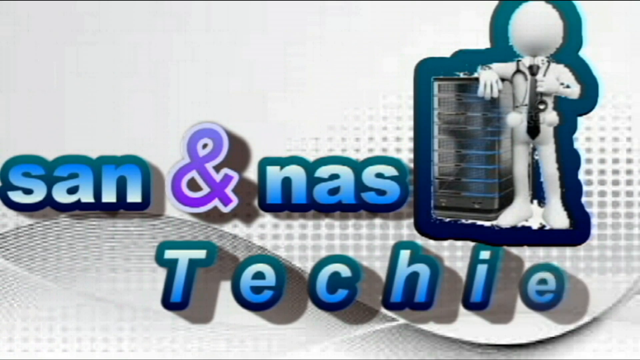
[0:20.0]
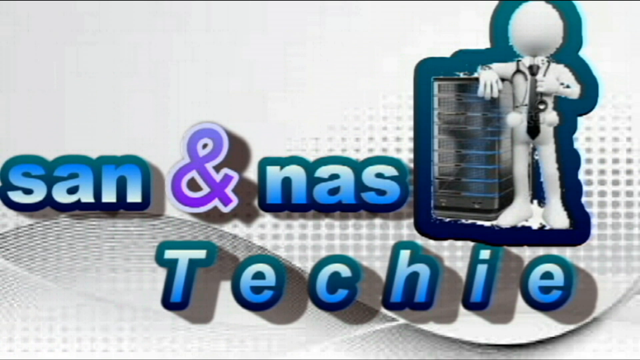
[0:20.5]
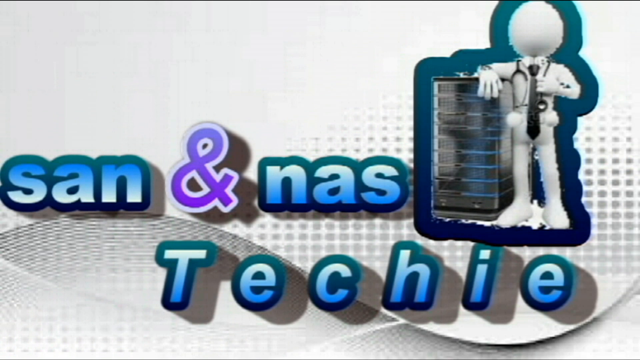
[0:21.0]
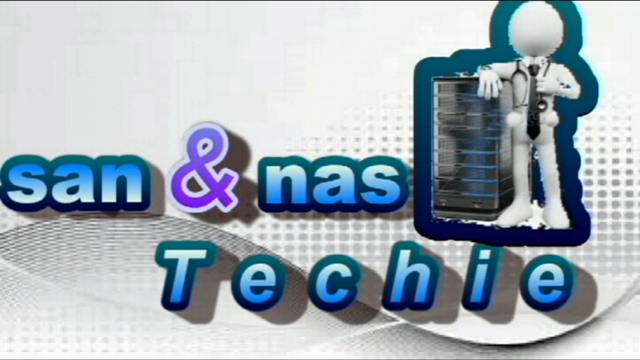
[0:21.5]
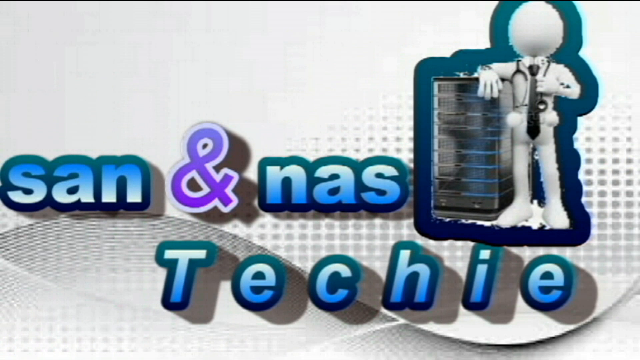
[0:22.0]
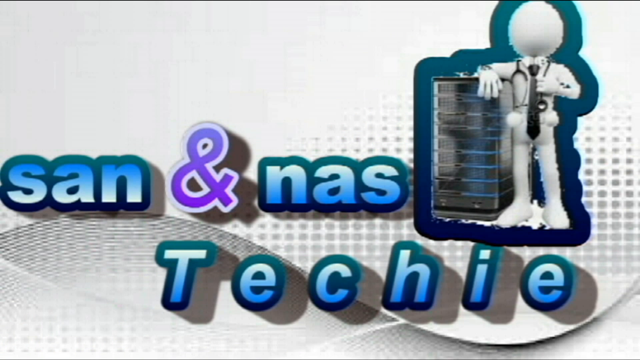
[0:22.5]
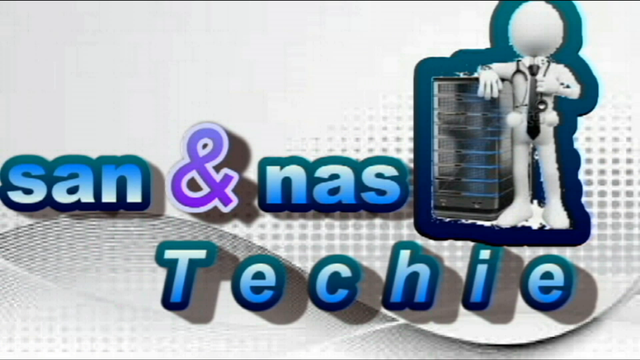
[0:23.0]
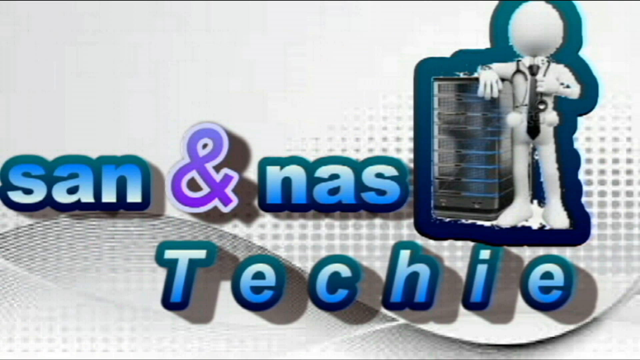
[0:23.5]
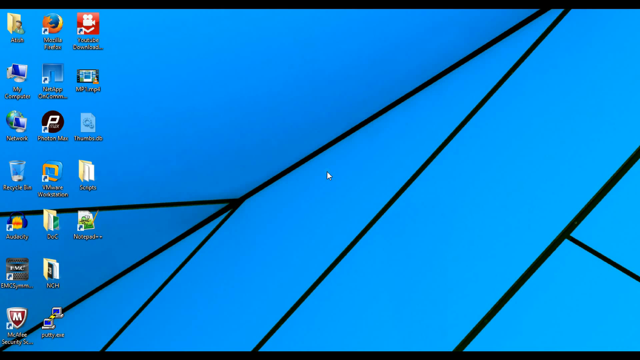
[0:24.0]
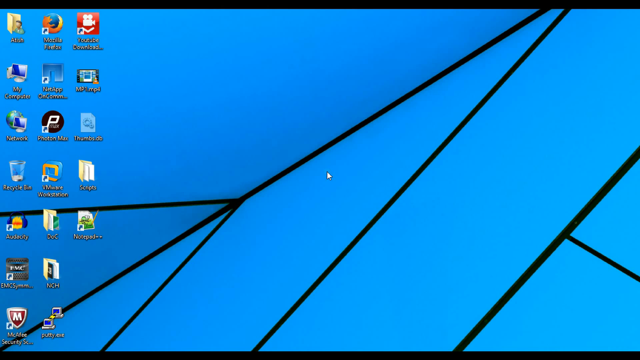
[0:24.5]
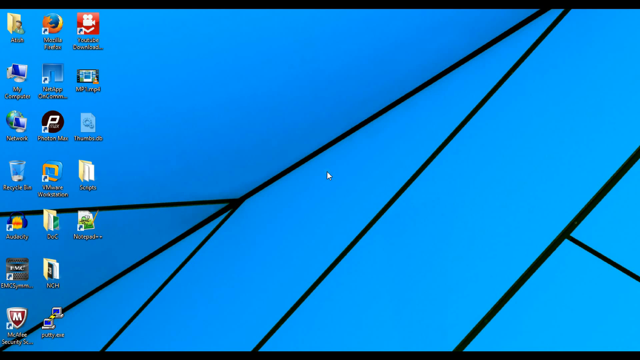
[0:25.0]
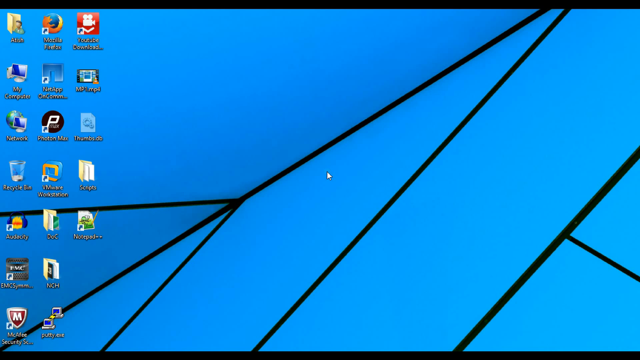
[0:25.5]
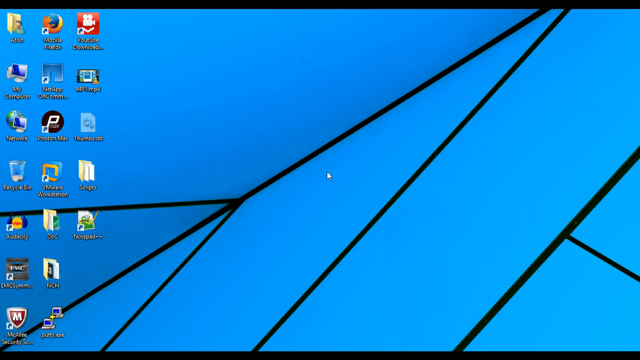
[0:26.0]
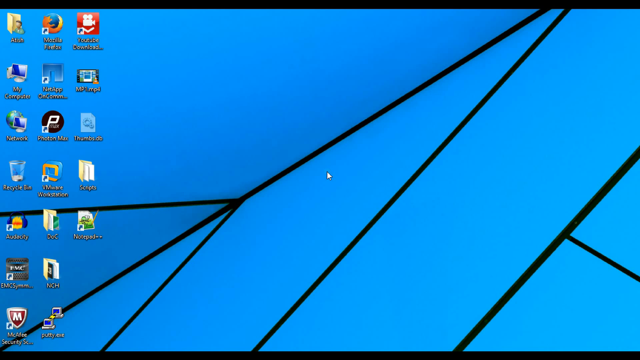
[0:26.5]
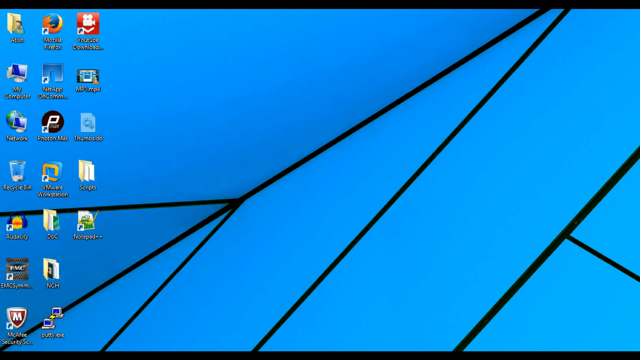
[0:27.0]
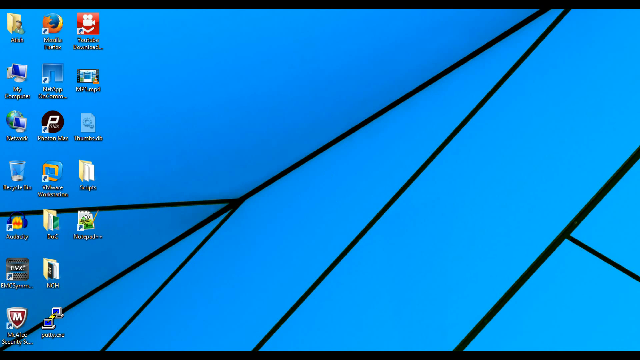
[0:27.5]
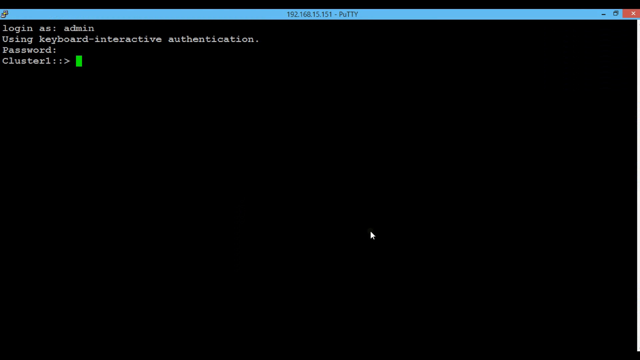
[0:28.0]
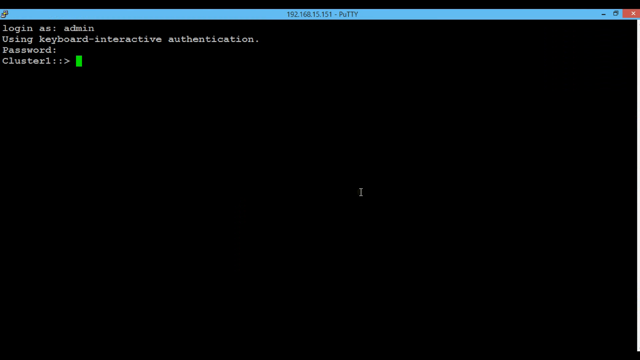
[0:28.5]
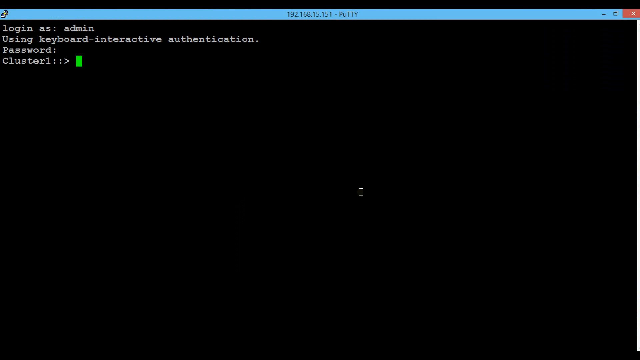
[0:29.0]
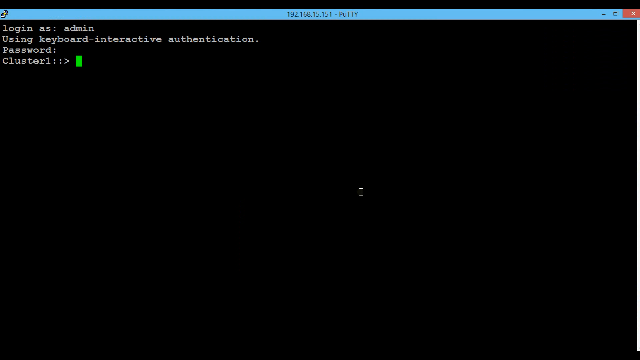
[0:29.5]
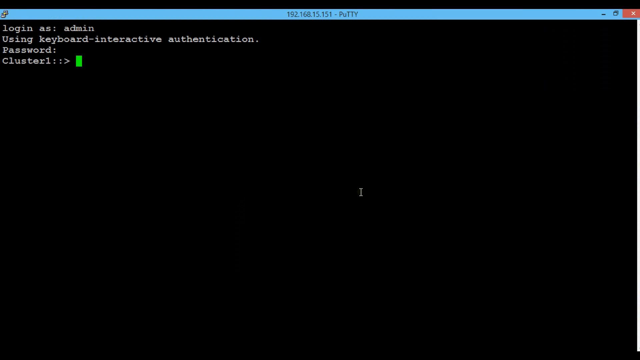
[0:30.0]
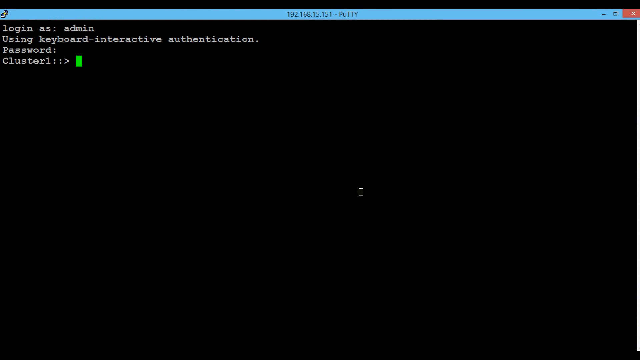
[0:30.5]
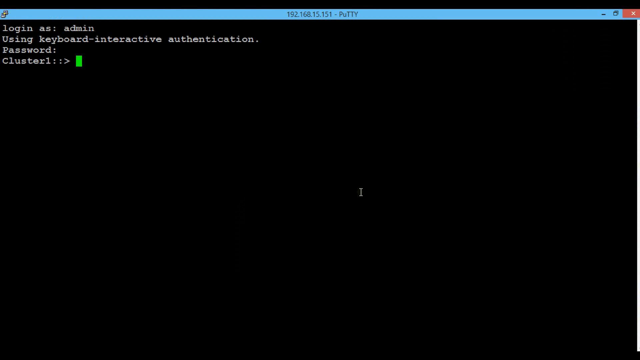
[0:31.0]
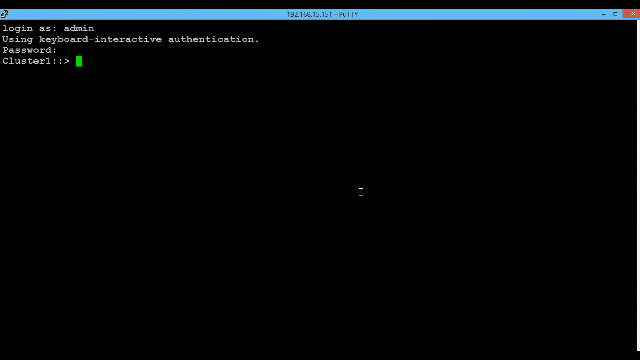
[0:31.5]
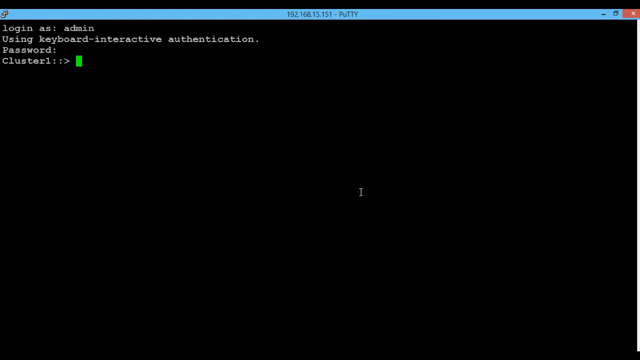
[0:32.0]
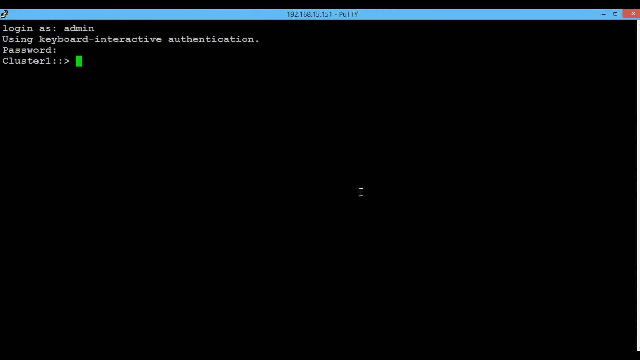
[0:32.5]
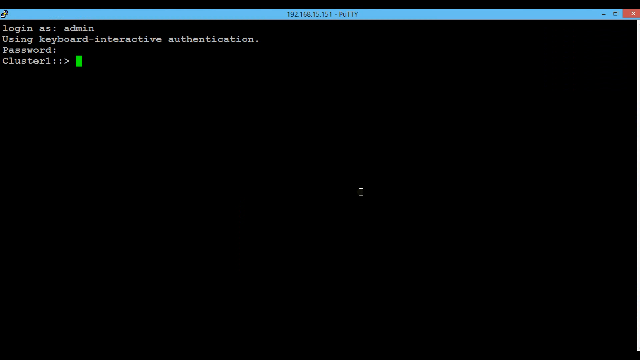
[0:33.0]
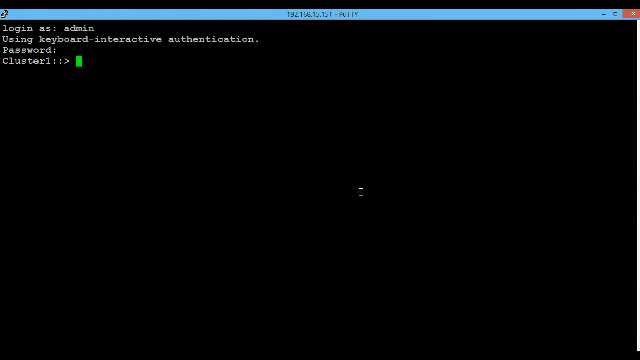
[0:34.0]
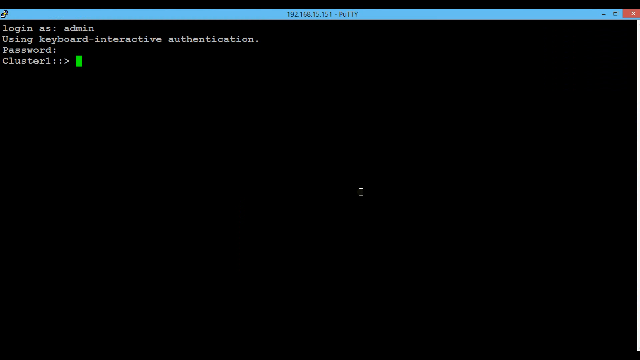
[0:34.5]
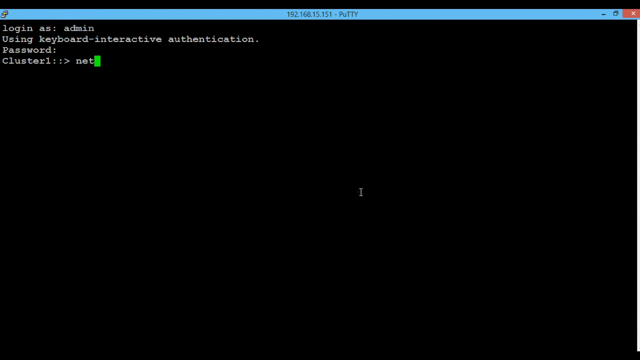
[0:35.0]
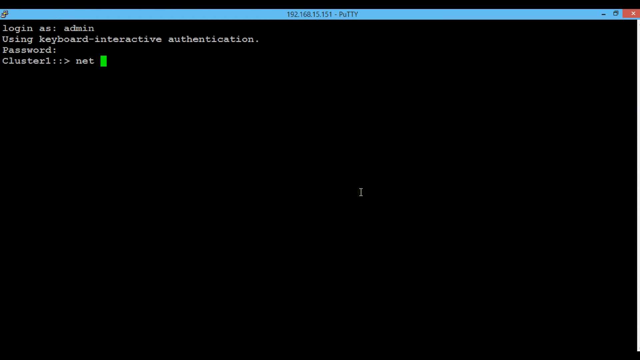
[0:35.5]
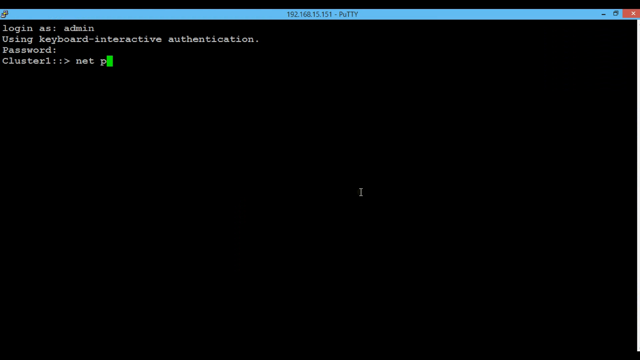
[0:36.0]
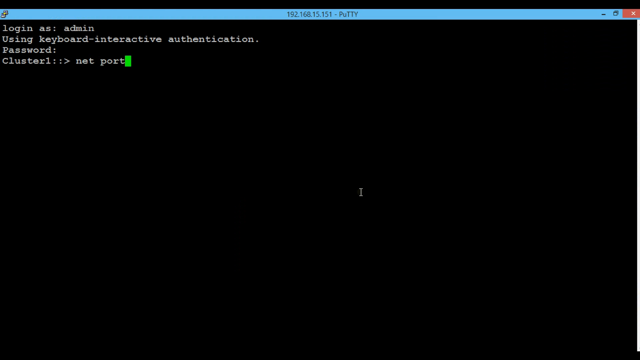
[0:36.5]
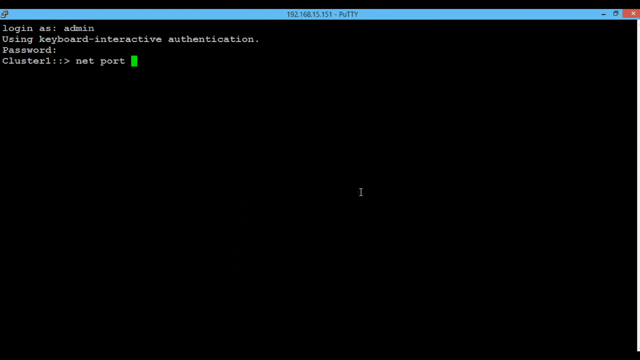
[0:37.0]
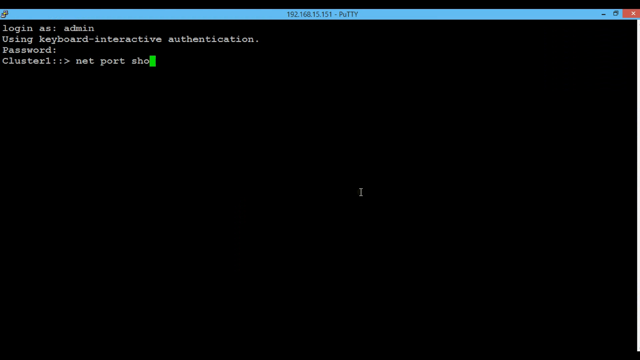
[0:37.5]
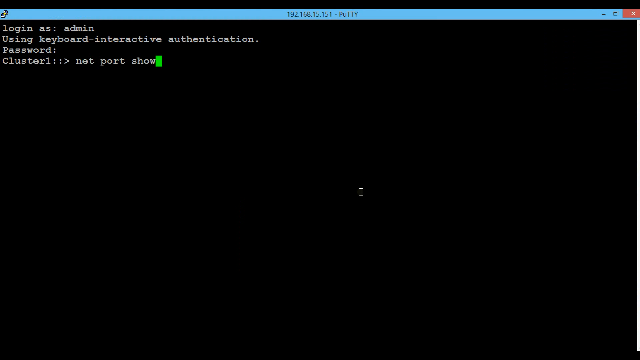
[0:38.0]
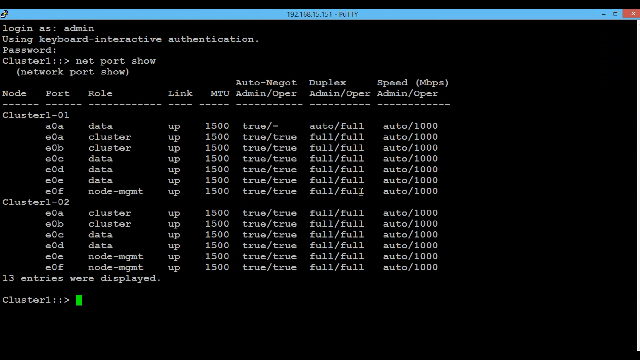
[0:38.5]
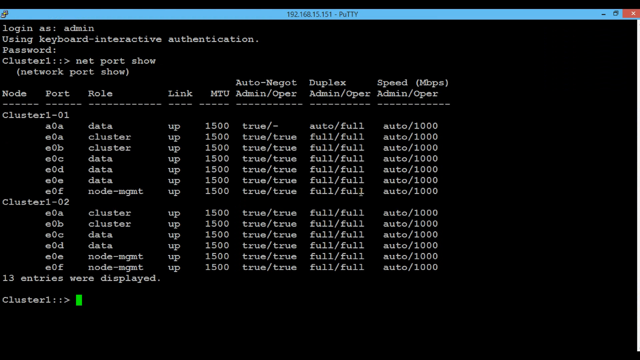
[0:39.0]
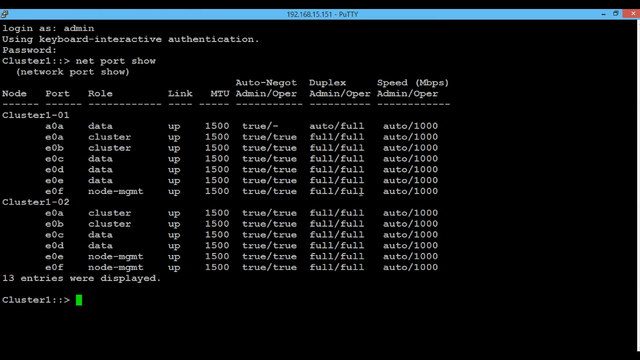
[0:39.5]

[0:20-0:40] The text "san amberson nas" appears in lowercase letters, with "Techie" (capital T) forming at the bottom. The background is white with a gradient and gray dots, some type of fading graphic, and the stick figure rests its arm on a box of servers beside the text. The screen goes back to the start screen and then to what appears to be a command or terminal mode: a black screen with typed code written out to execute a command in the operating system. The white text on the black screen appears to be a command being typed in progress, and the screen blinks a few times.